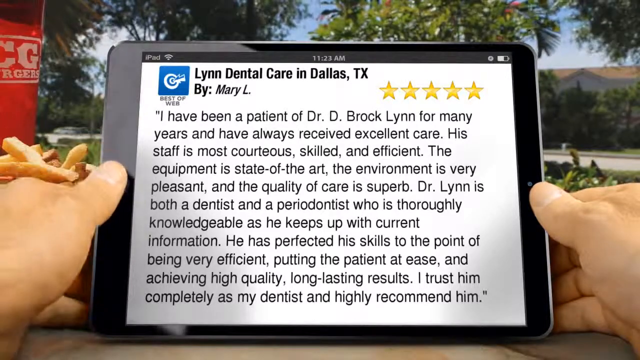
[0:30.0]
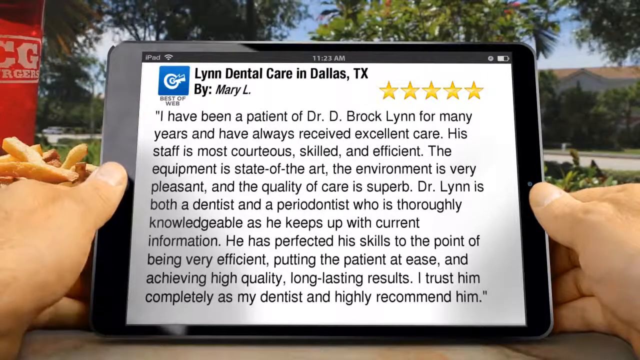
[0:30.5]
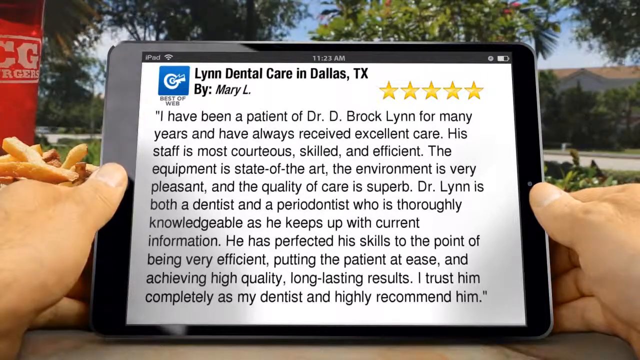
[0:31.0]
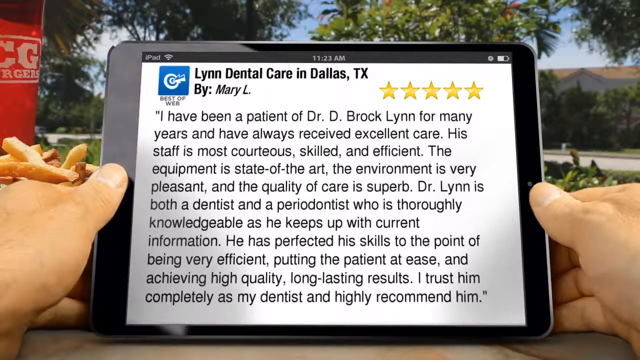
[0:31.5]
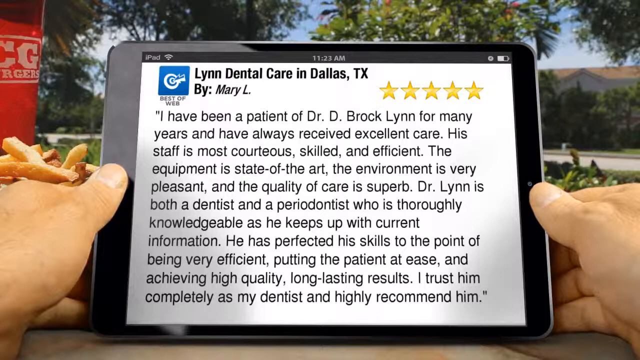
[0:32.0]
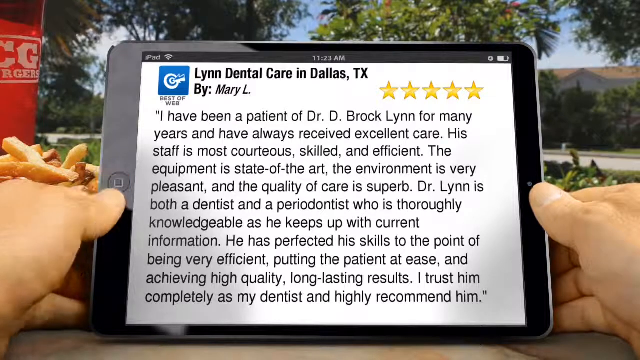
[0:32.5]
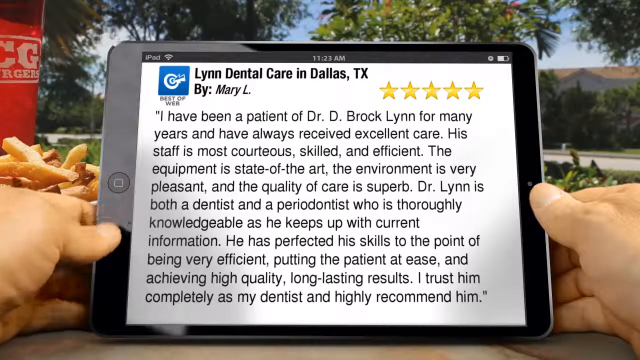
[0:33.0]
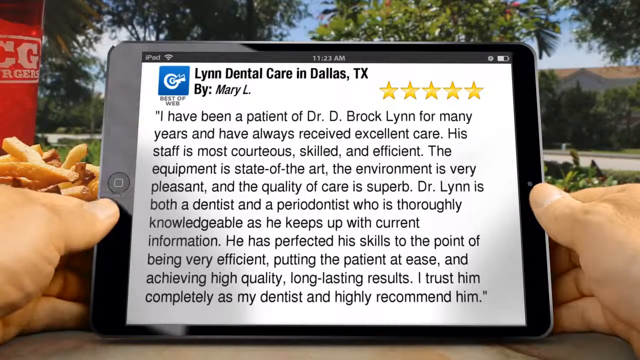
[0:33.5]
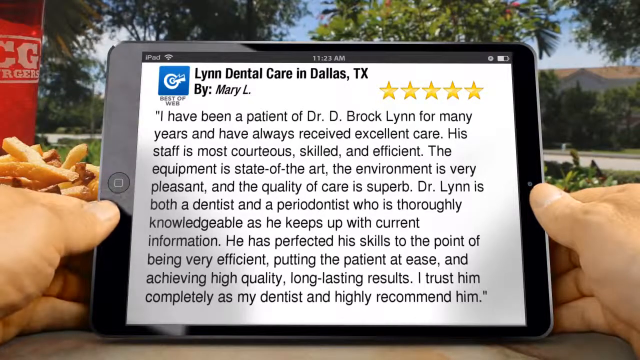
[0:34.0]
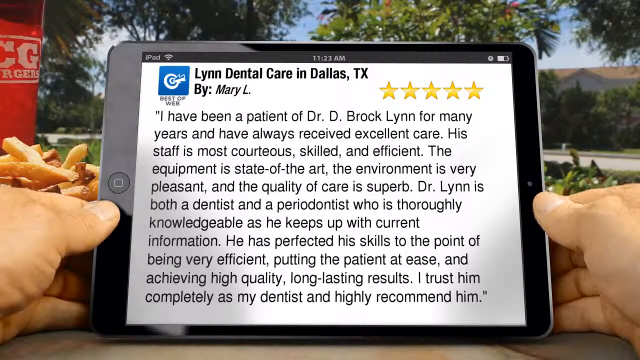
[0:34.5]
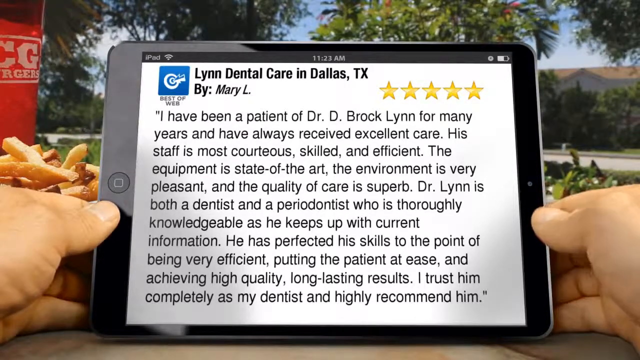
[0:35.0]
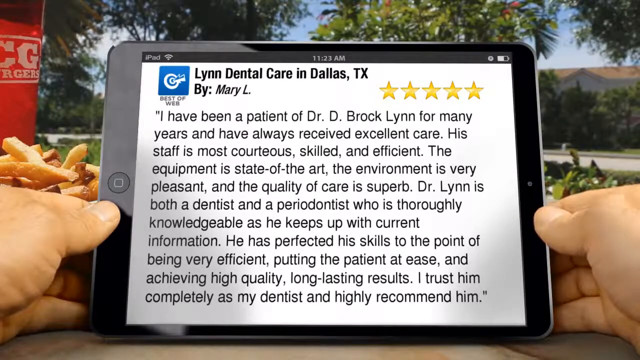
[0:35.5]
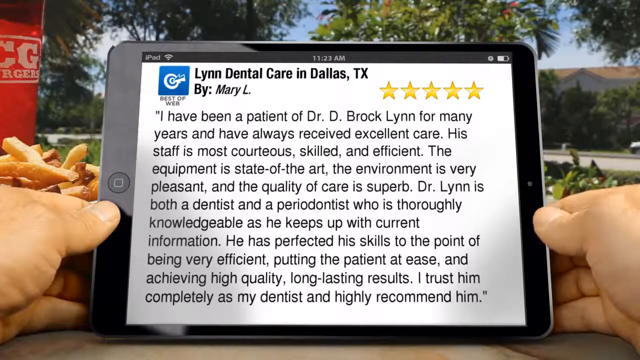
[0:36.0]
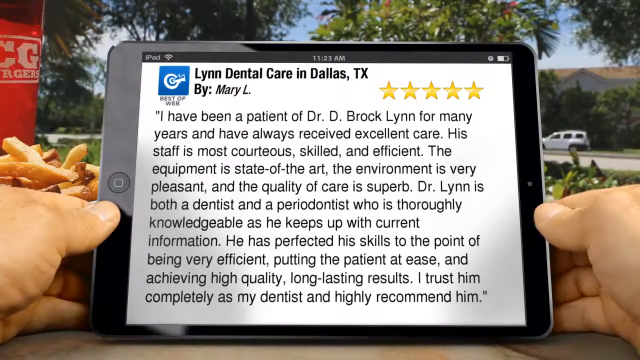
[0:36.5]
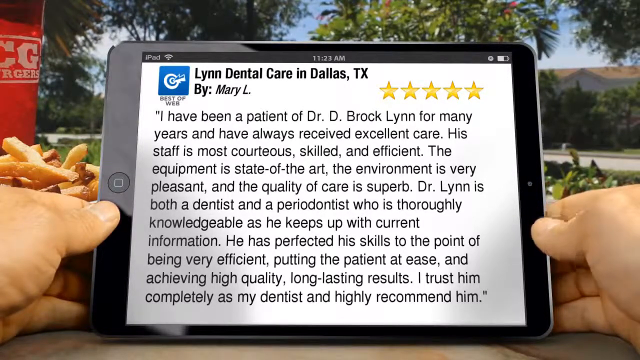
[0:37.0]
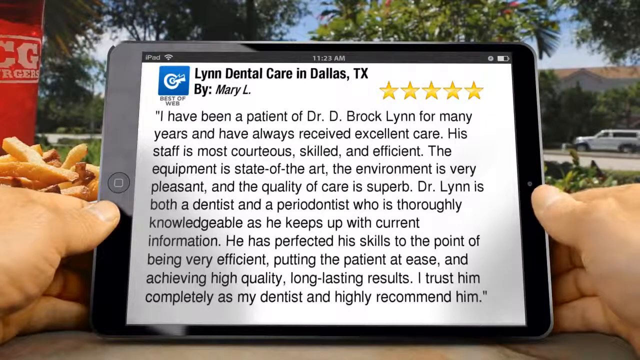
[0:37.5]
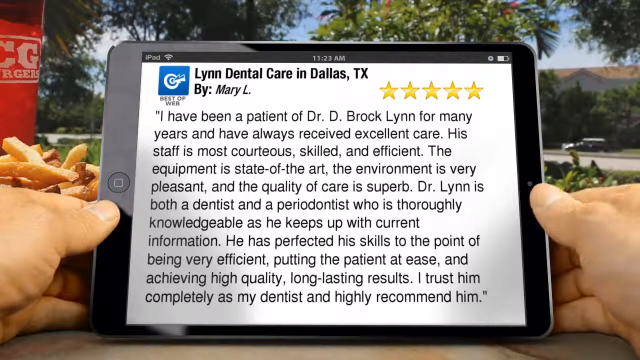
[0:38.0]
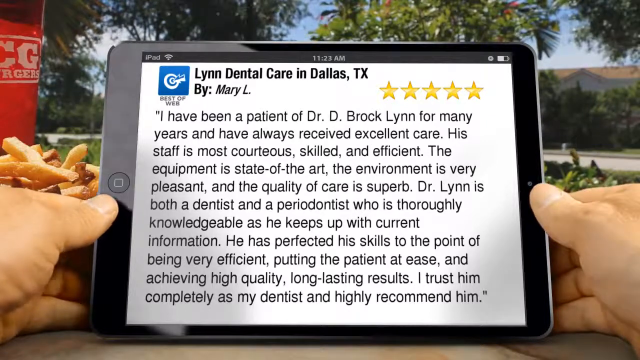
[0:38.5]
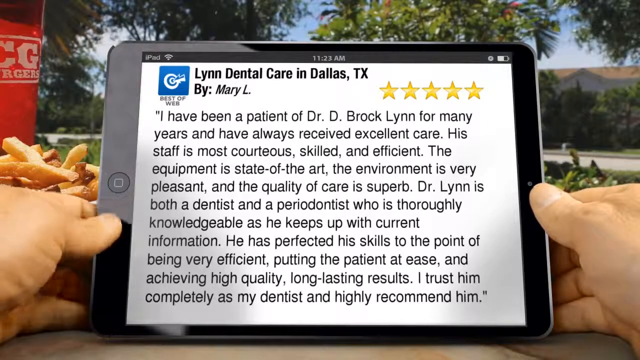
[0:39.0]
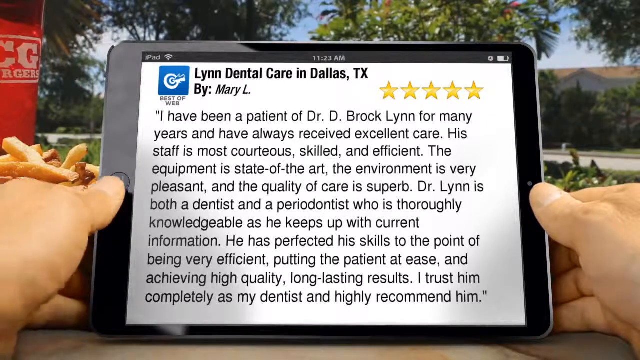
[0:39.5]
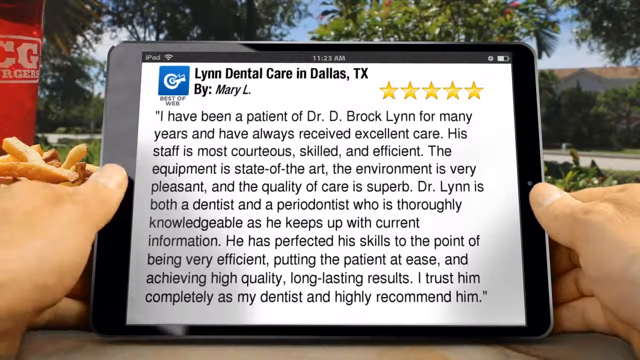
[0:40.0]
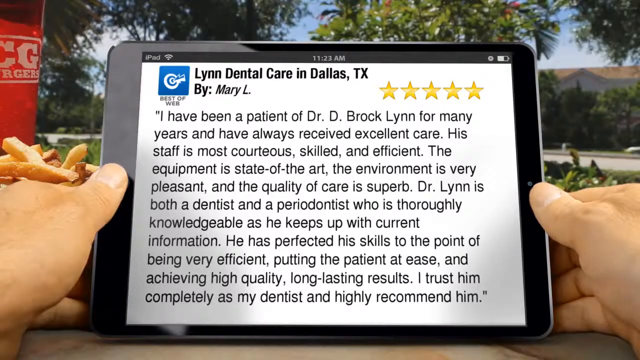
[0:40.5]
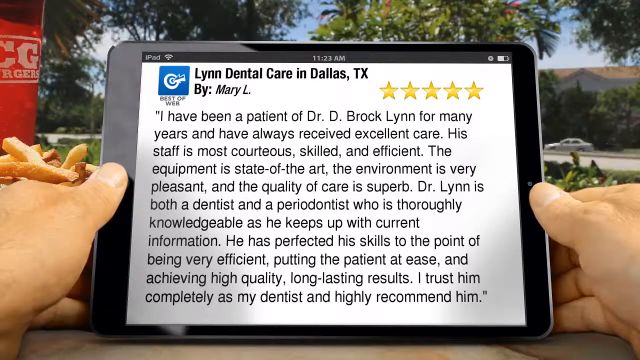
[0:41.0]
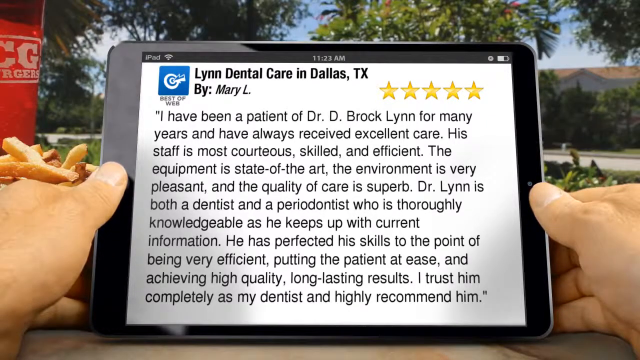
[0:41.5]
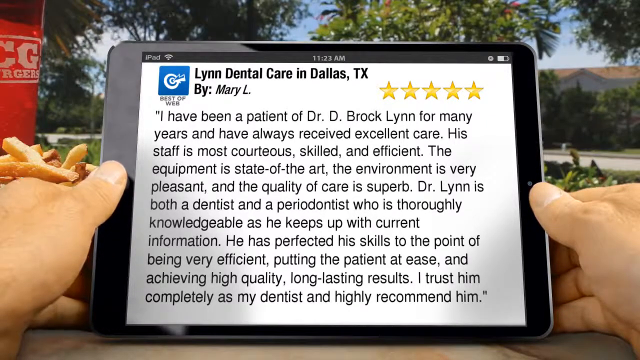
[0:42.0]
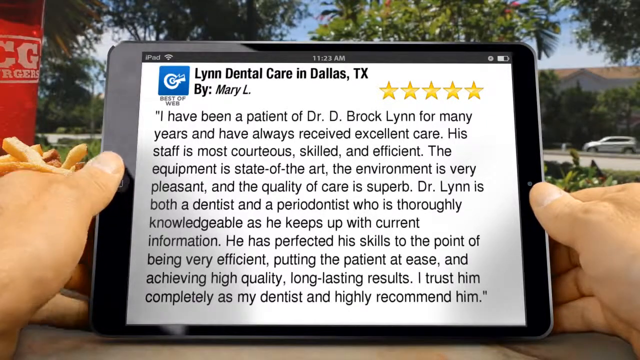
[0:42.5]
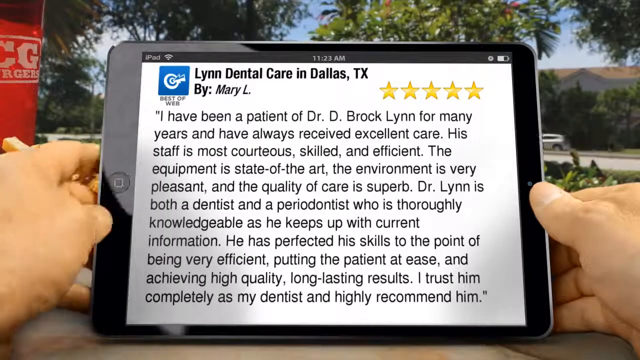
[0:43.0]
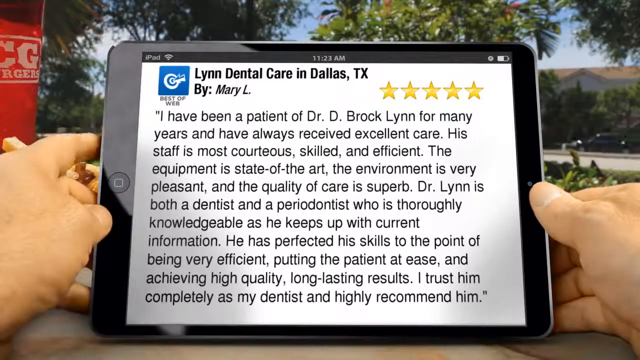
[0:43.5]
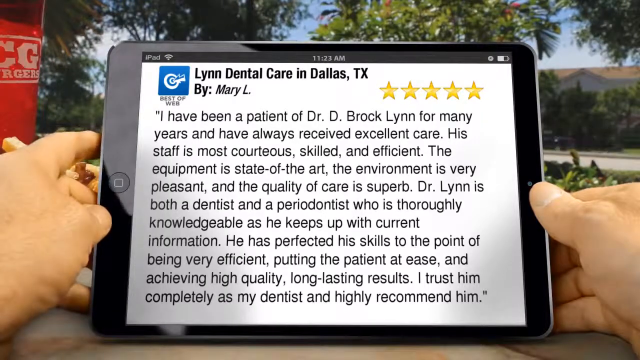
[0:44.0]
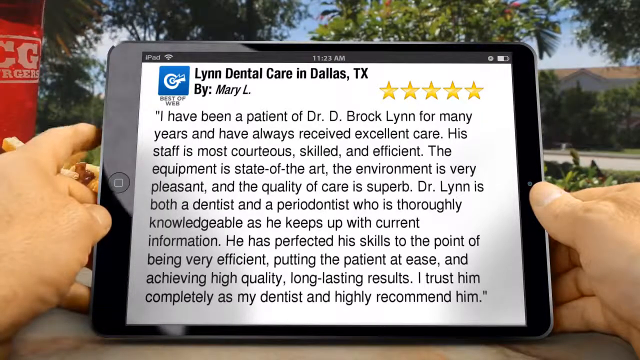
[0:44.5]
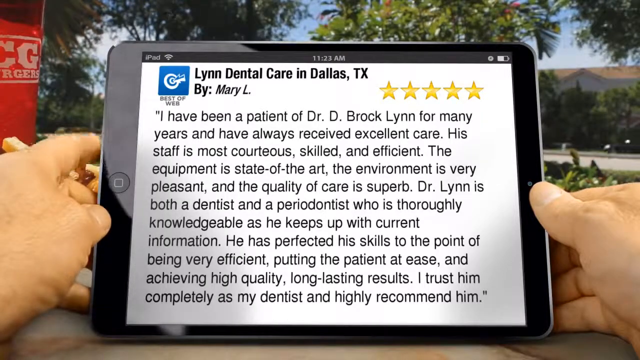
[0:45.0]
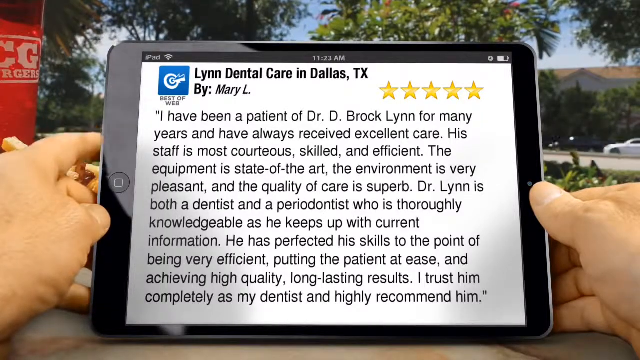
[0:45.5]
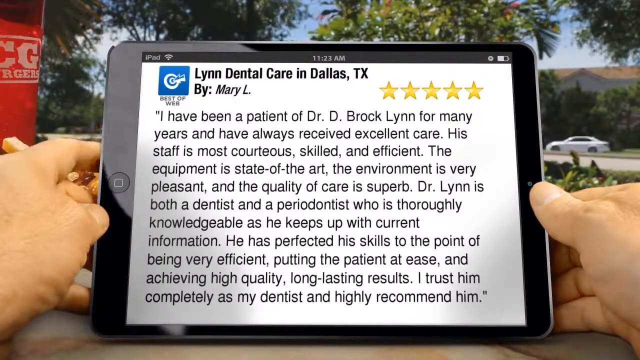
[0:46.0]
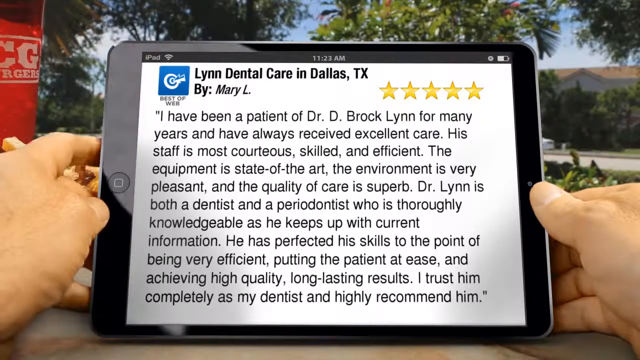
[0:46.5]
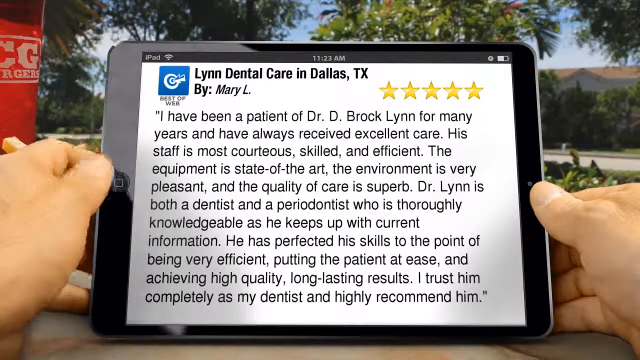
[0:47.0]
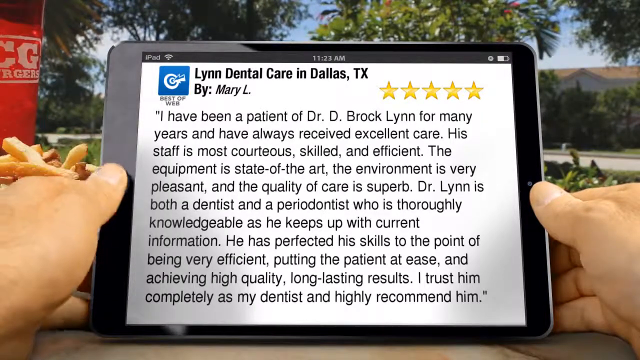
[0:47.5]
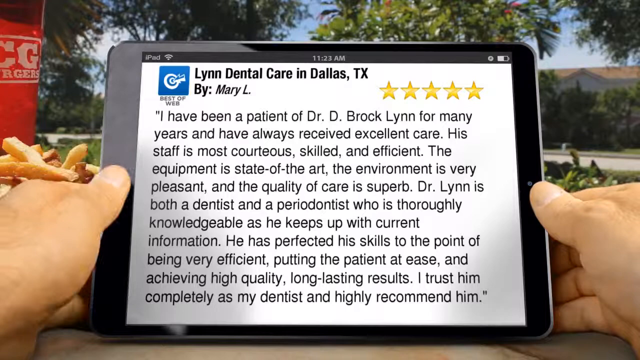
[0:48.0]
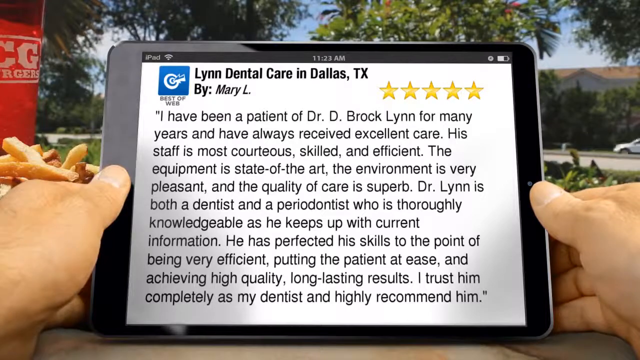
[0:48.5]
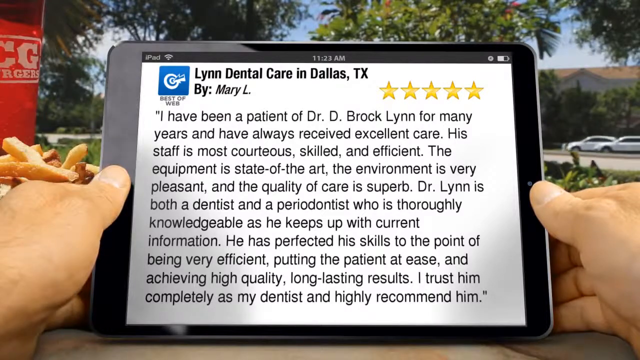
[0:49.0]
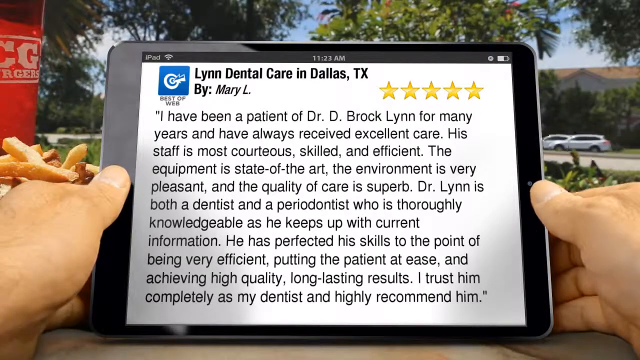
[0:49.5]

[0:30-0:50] A man holds an iPad, lightly grazing his thumb down it. On the iPad is a five-star review of Lynn Dental Care in Dallas, Texas, written by Mary L. on a review site. The man seemingly looks at the review, tapping his finger against the iPad and continuously grazing it with his fingers, slowly reading while moving his thumbs over it. In the background is a picture of a safe-looking neighborhood with cars driving by, and a white van or SUV drives down the street. The review is about Dr. Brock Lynn and his staff, the equipment at his dentistry and the quality of care, and the patient highly recommends him. Behind the iPad are some french fries and what looks like it could be a drink from a burger joint.